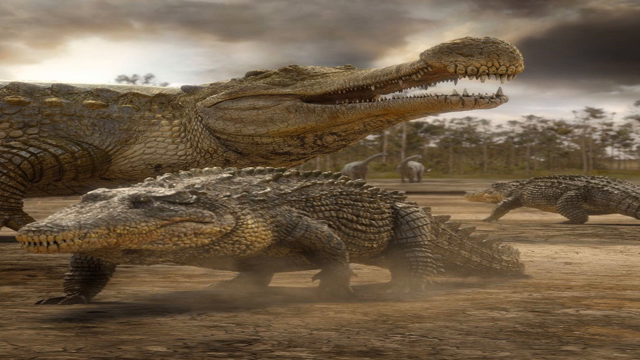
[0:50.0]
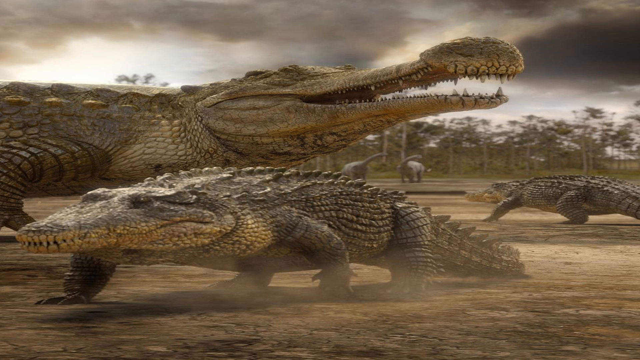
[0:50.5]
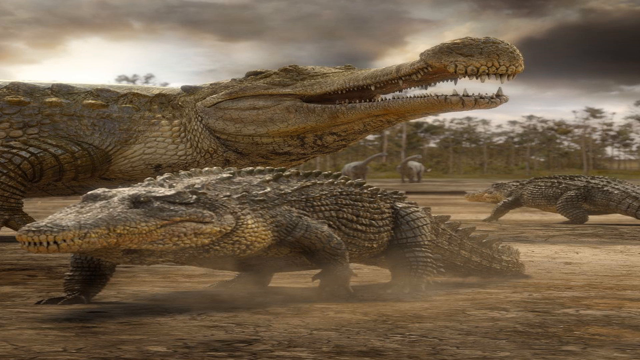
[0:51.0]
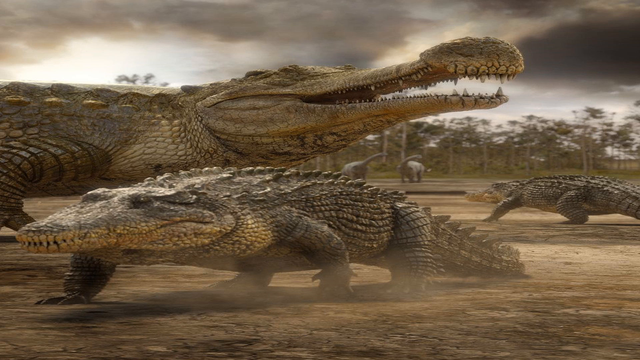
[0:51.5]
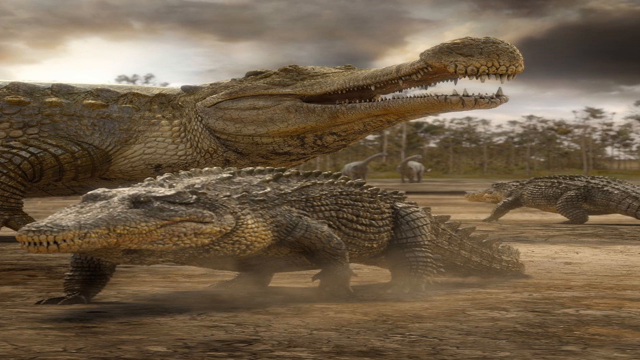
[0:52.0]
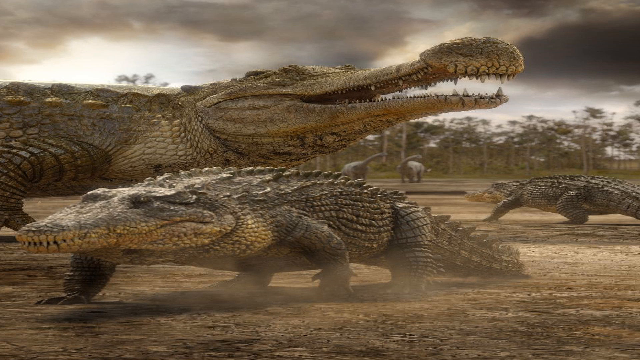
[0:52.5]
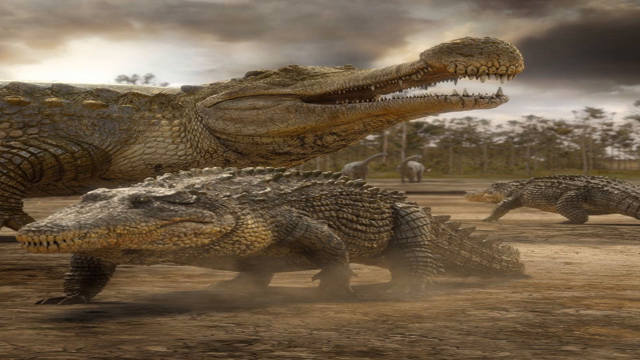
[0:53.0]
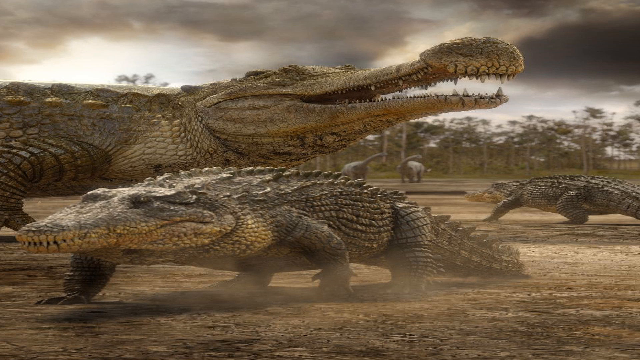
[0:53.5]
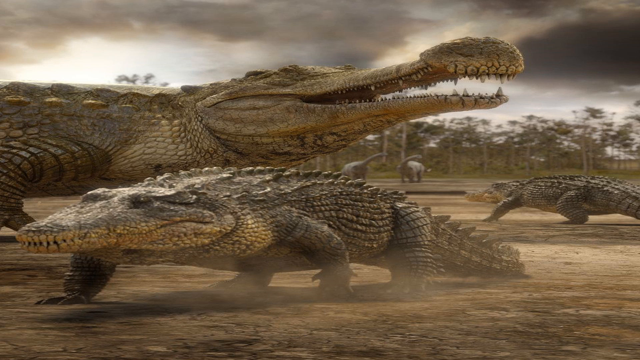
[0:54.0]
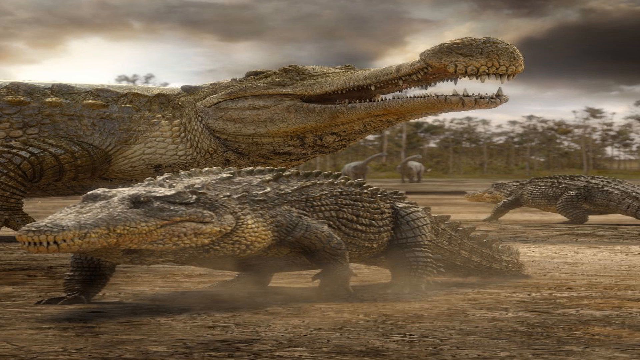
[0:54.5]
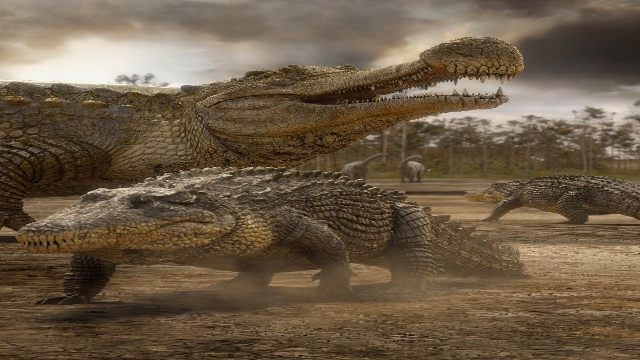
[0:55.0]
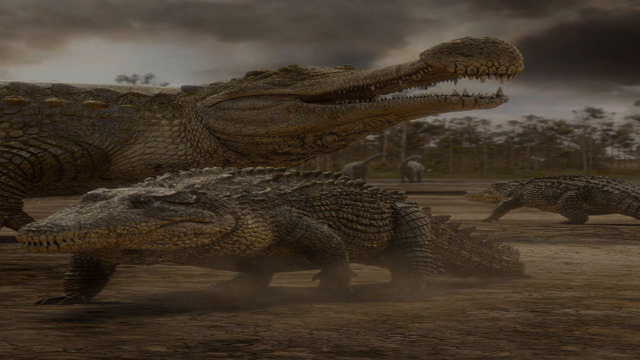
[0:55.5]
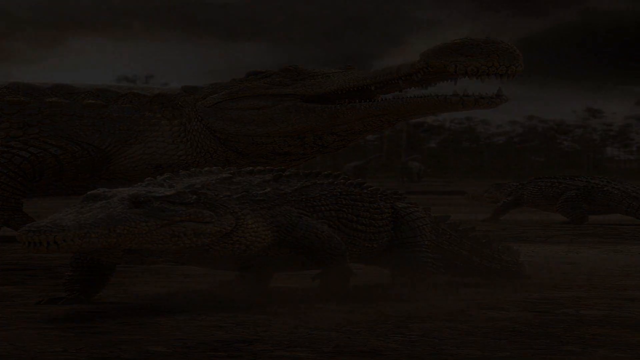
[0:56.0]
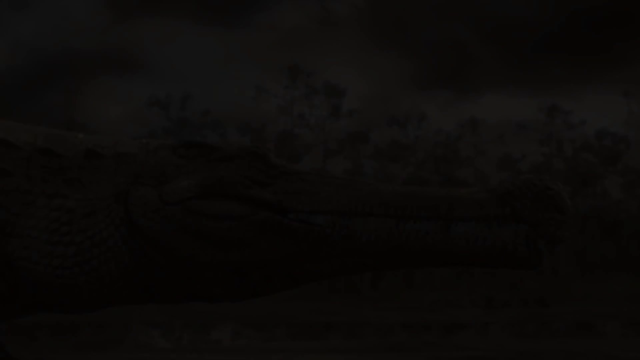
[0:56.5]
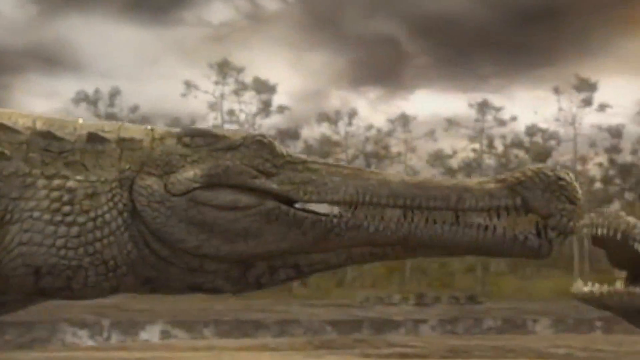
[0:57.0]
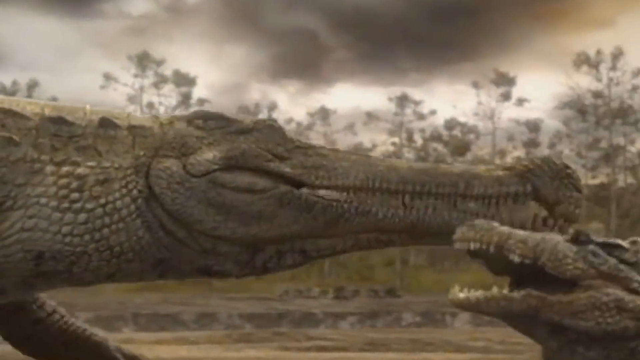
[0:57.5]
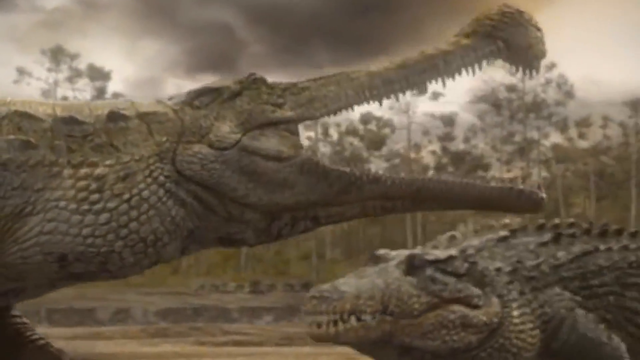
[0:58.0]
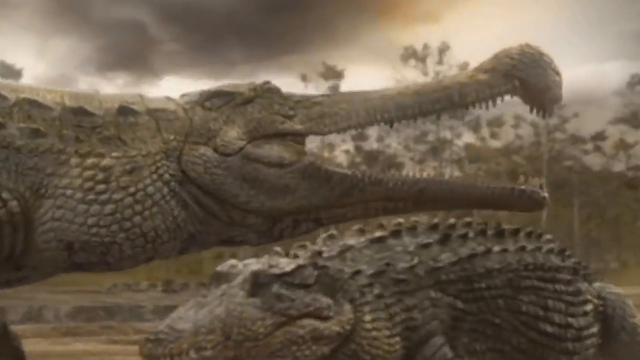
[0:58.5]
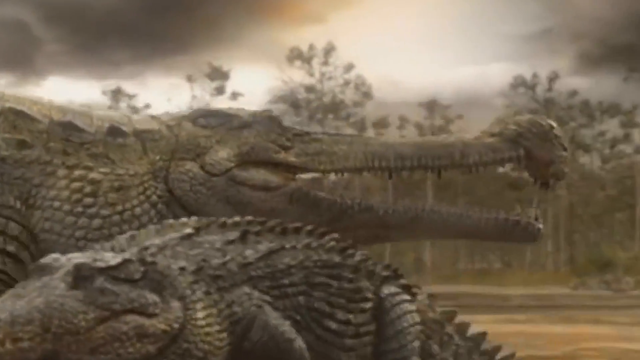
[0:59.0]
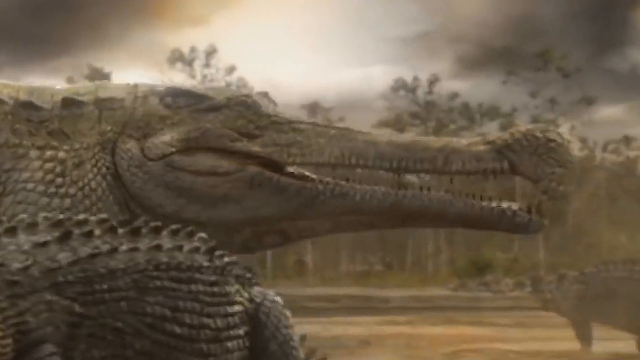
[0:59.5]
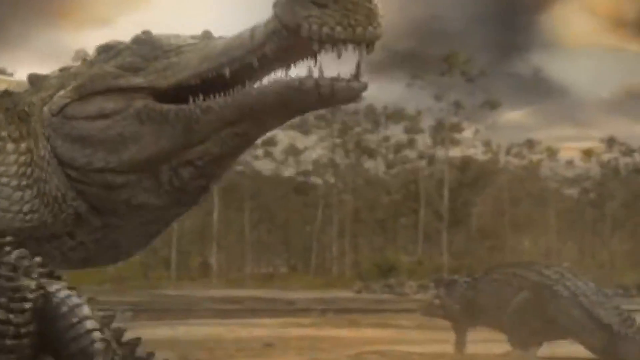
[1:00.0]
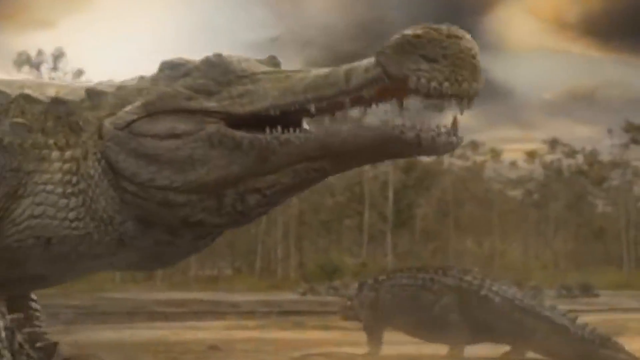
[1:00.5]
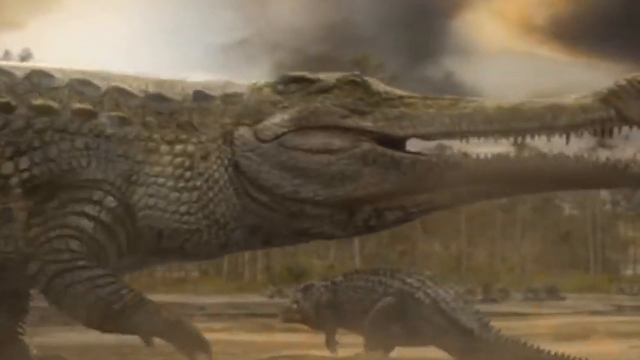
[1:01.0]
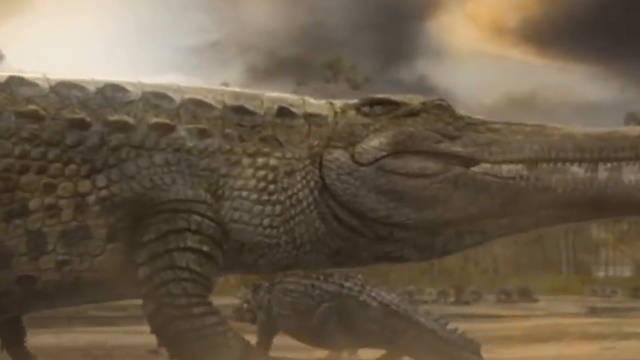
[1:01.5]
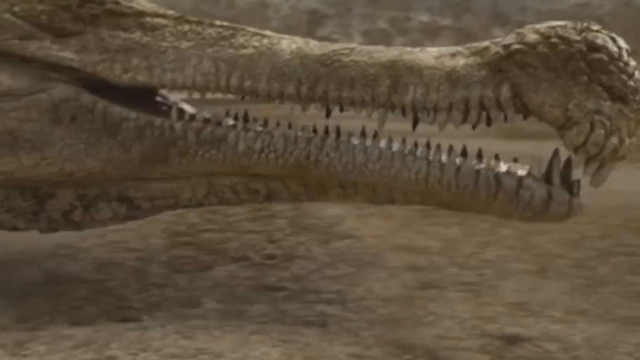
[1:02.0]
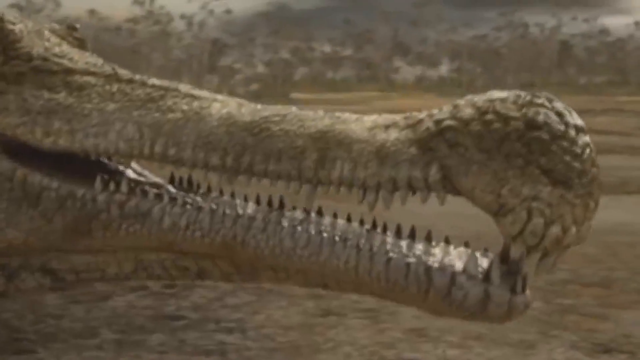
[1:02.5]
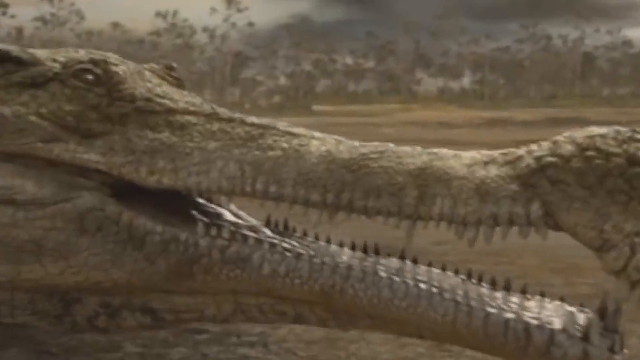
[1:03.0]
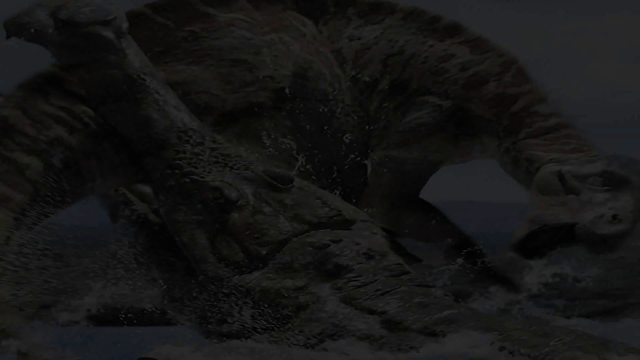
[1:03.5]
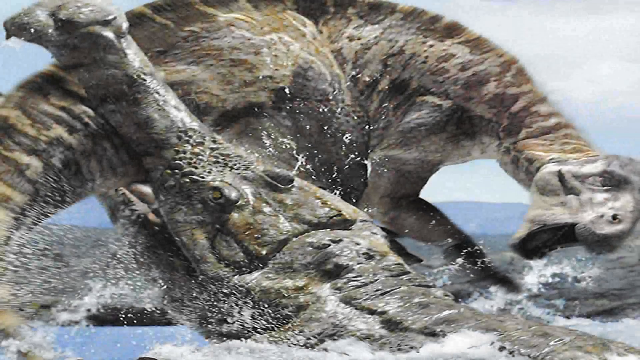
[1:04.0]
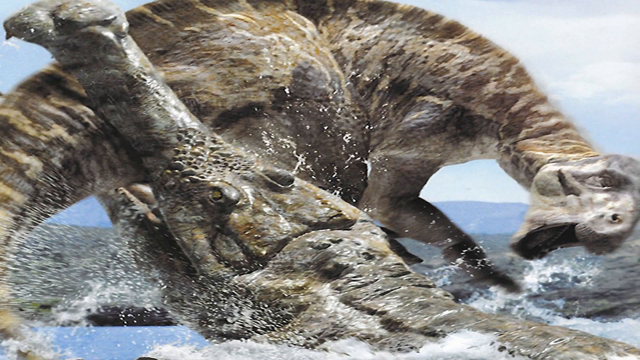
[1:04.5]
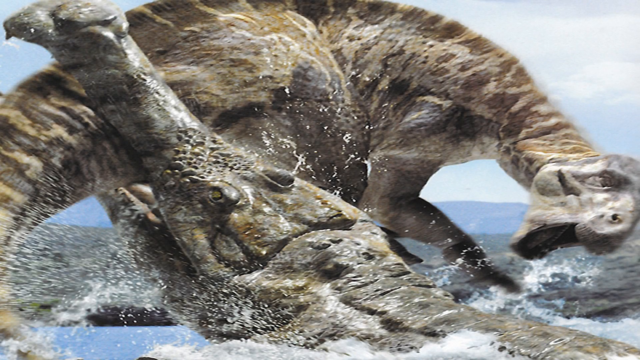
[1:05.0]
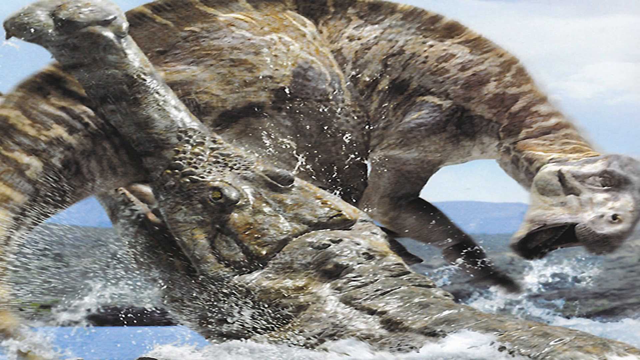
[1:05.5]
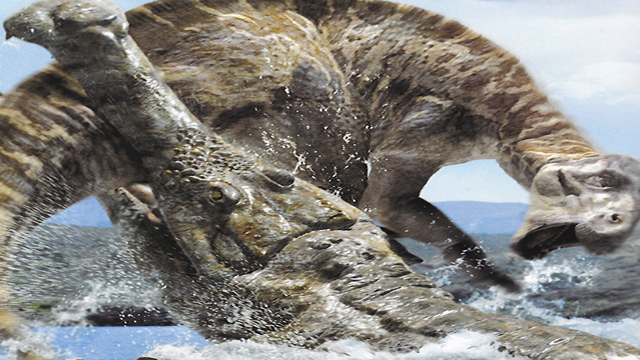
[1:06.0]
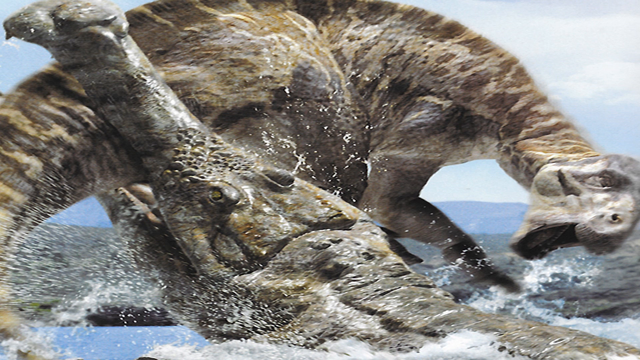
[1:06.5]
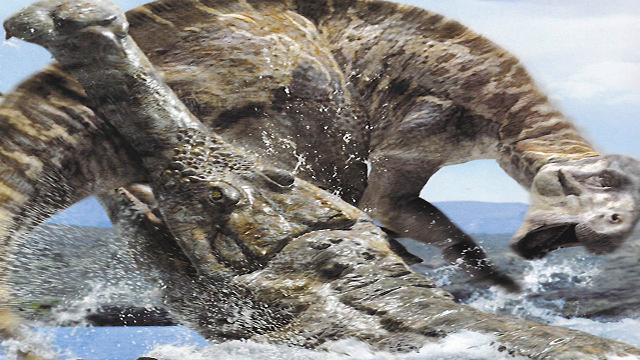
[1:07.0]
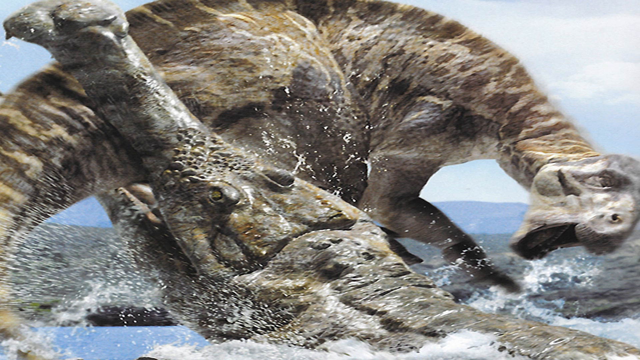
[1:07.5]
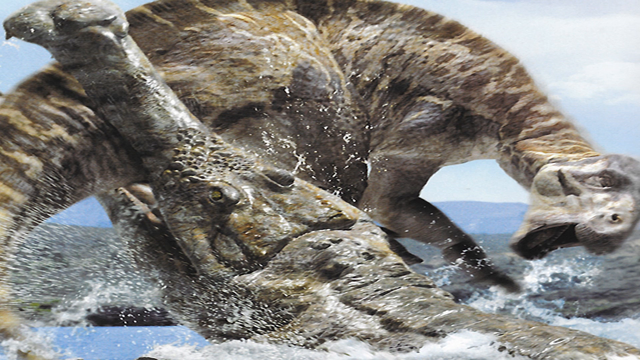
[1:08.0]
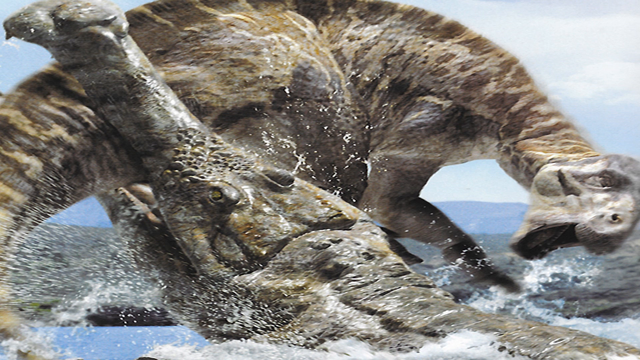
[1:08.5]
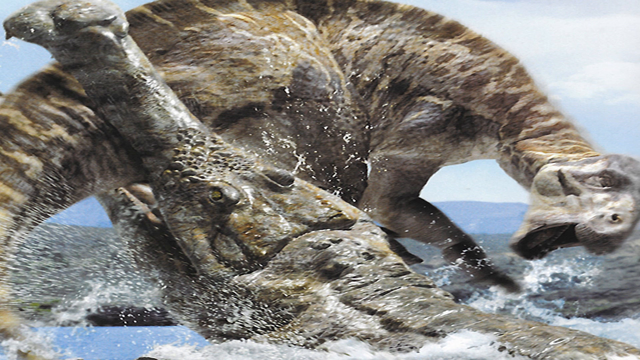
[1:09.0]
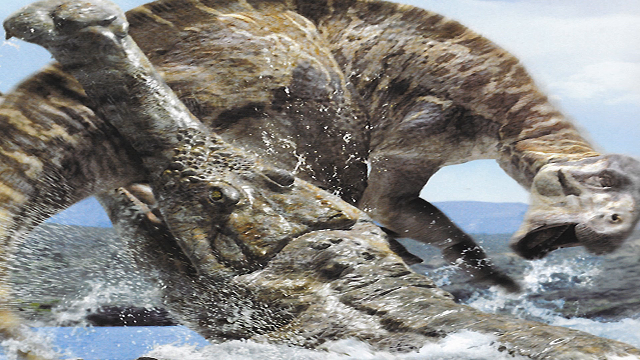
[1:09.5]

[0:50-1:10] The still image of the smaller crocodile walking under the head of the larger crocodile, with the crocodile in the background walking toward the dinosaurs, comes to life as video. As the huge crocodile walks, it turns its head toward the camera, showing an unrealistically narrow snout with a huge bulbous nose at the end, and keeps walking. A close-up camera view shows the crocodile's odd-looking snout, the tiny teeth within its mouth, and eyes that look rather dead compared with a real crocodile's. The screen then changes to a still image that looks more like a hand drawing of a crocodile coming up out of the water and clamping its mouth over the tail of what appears to be some sort of dinosaur that is down at the water.